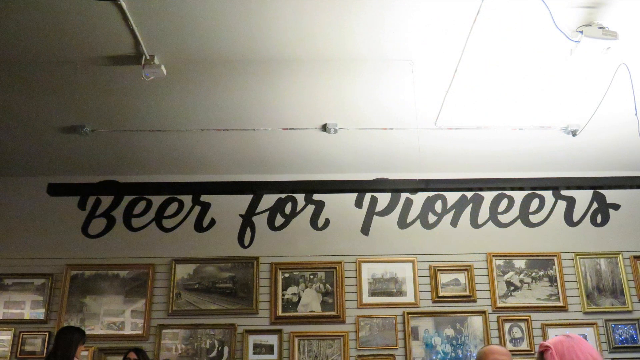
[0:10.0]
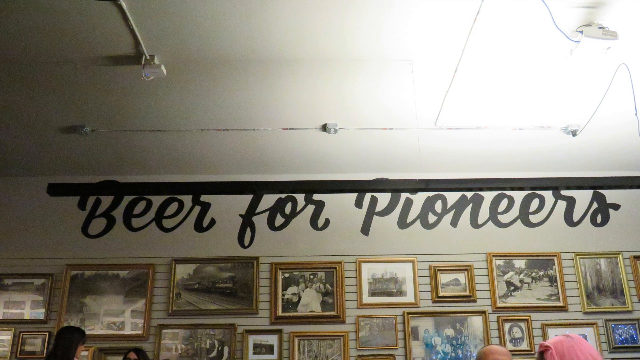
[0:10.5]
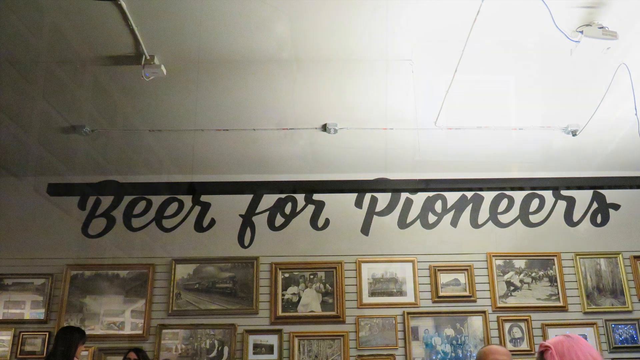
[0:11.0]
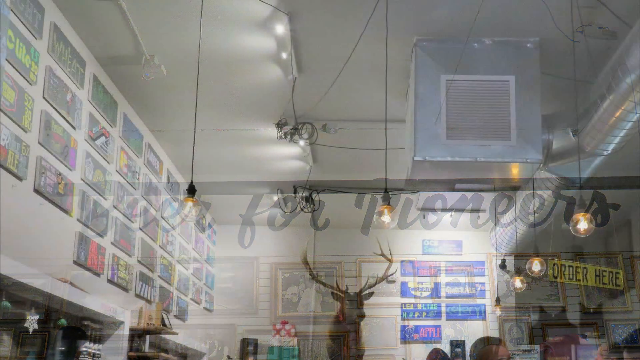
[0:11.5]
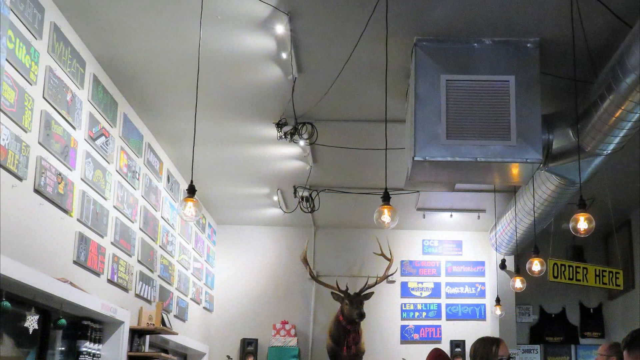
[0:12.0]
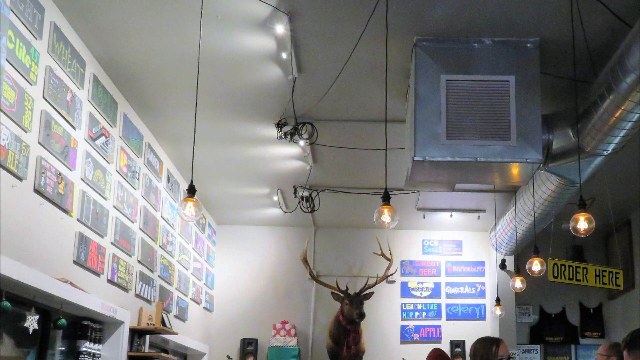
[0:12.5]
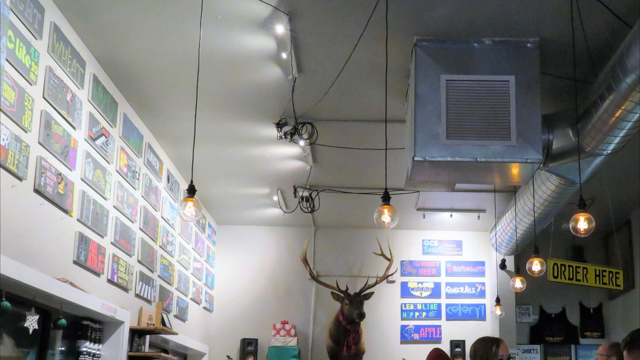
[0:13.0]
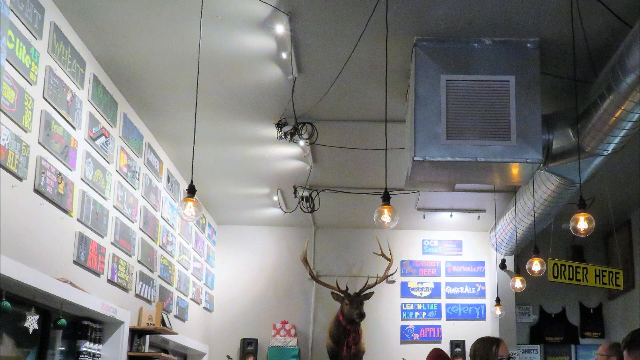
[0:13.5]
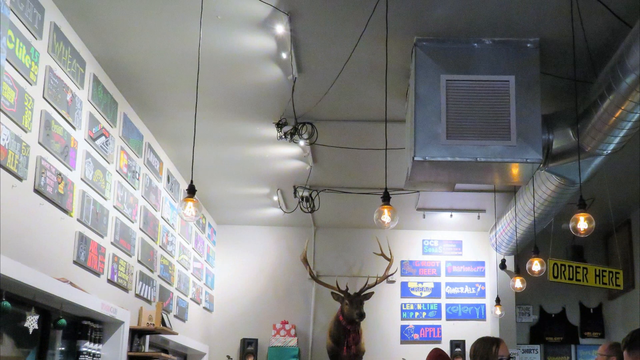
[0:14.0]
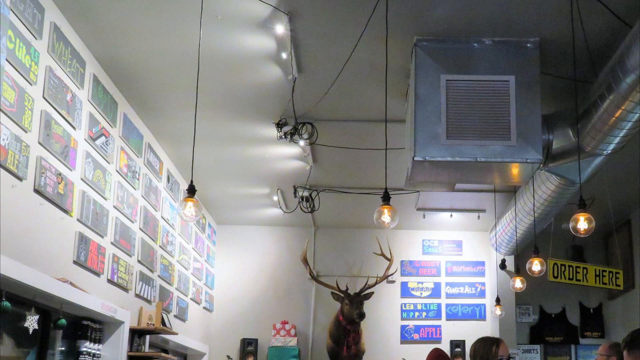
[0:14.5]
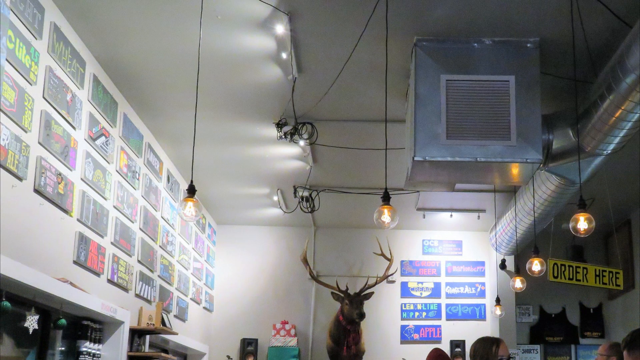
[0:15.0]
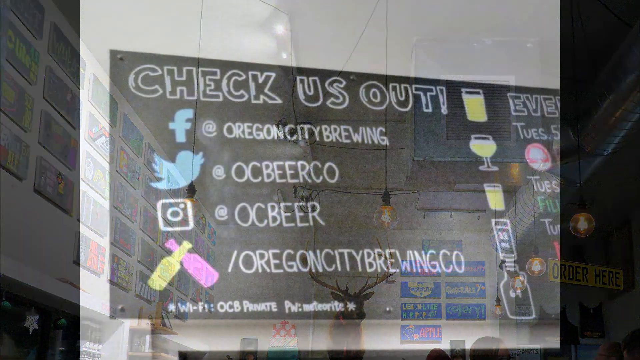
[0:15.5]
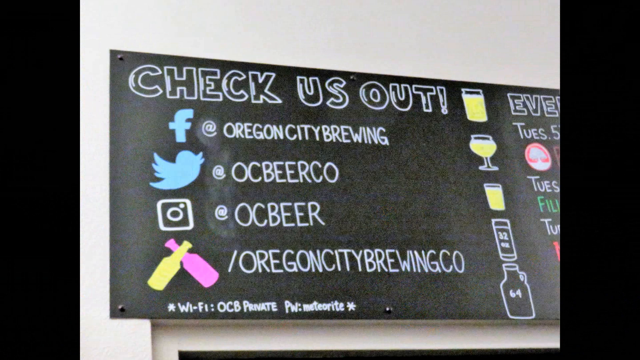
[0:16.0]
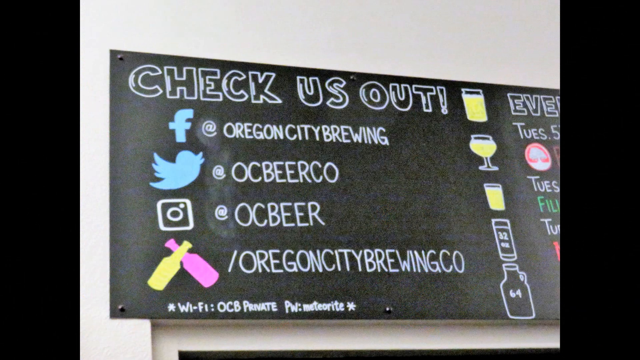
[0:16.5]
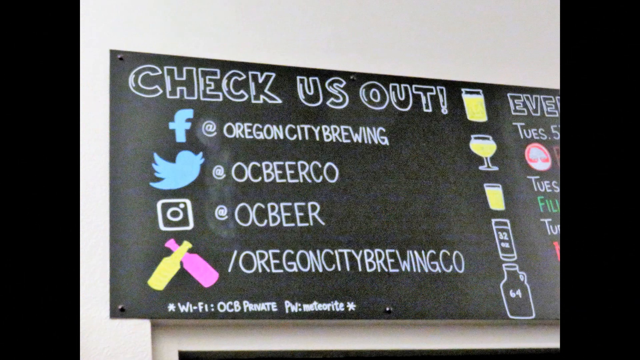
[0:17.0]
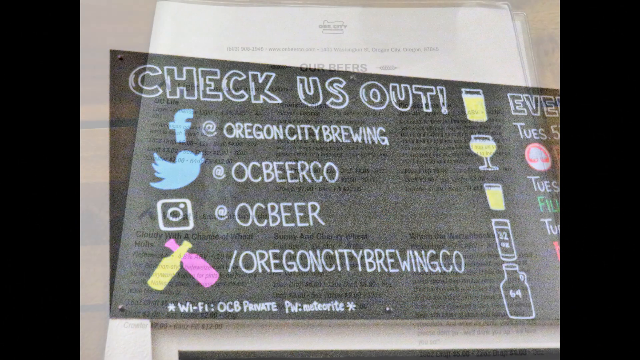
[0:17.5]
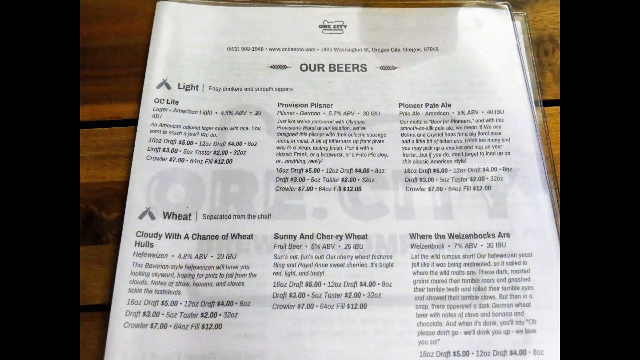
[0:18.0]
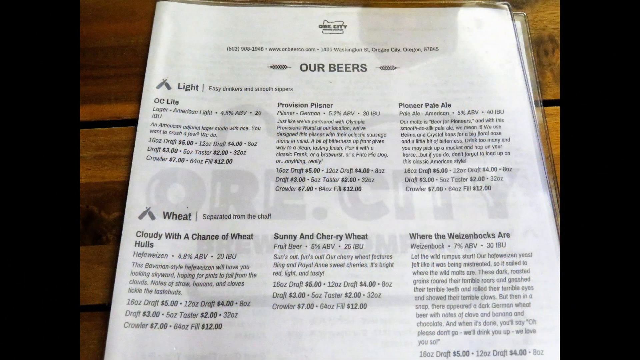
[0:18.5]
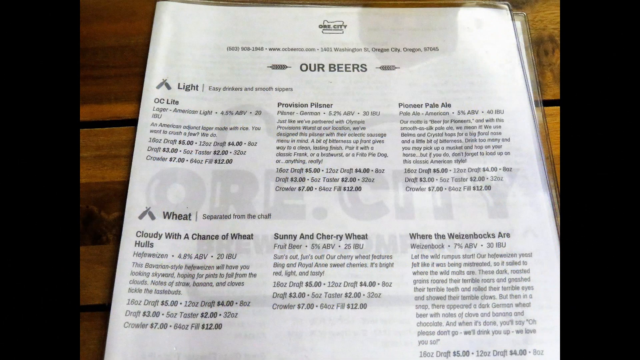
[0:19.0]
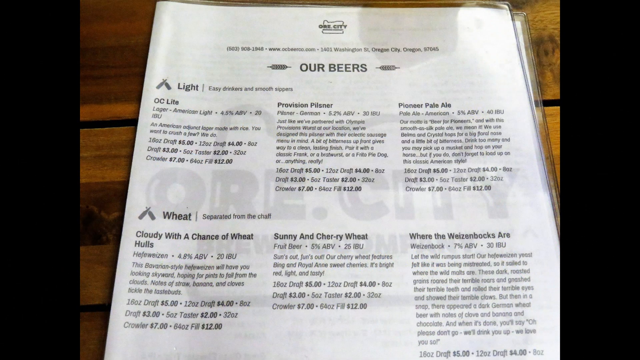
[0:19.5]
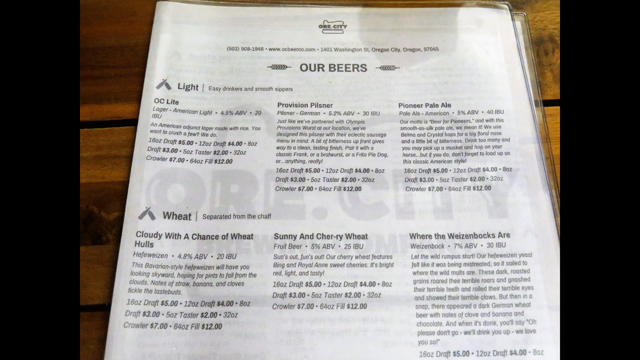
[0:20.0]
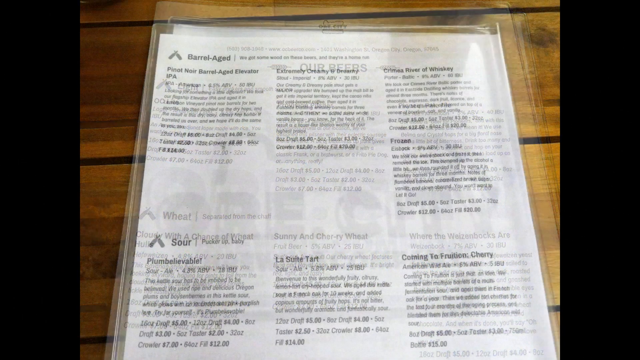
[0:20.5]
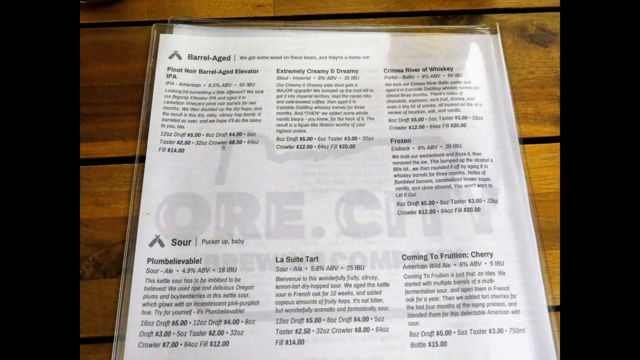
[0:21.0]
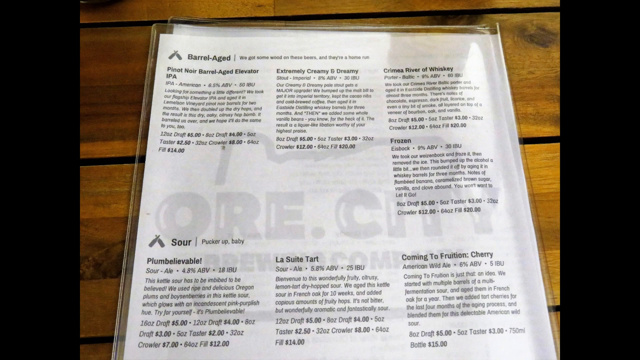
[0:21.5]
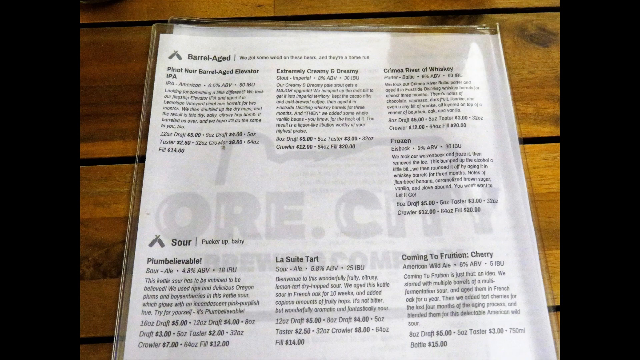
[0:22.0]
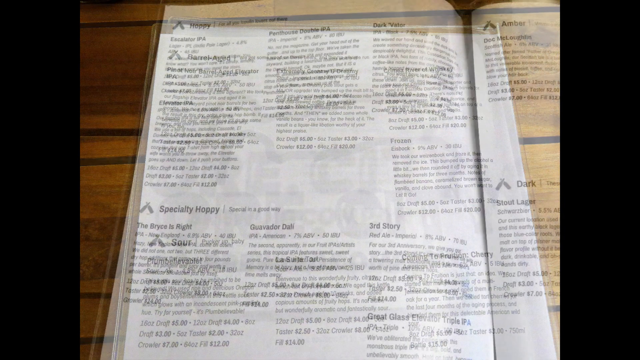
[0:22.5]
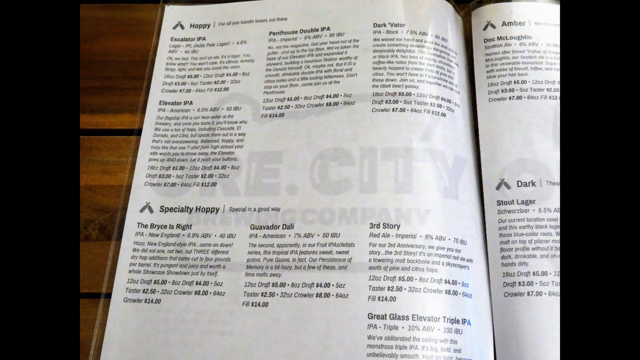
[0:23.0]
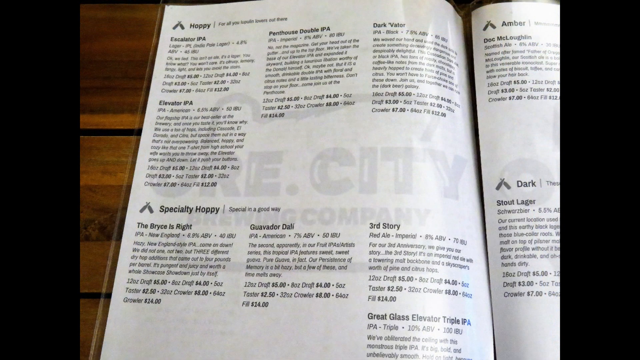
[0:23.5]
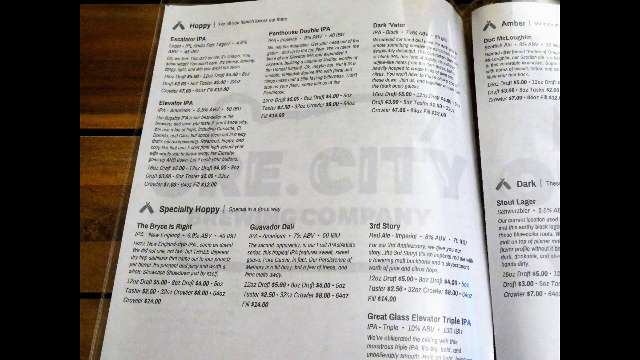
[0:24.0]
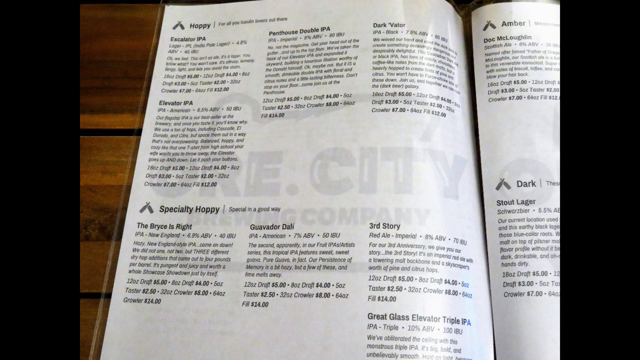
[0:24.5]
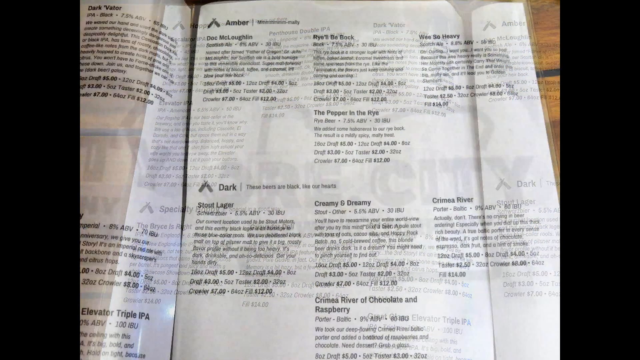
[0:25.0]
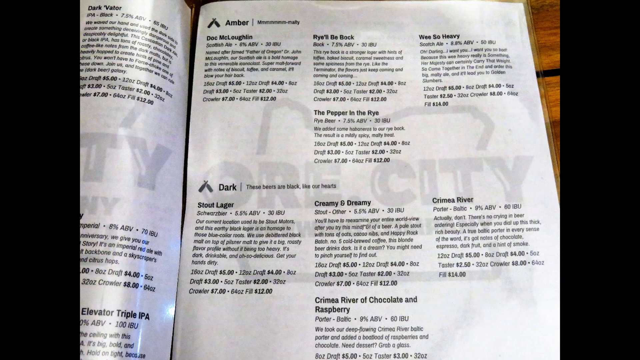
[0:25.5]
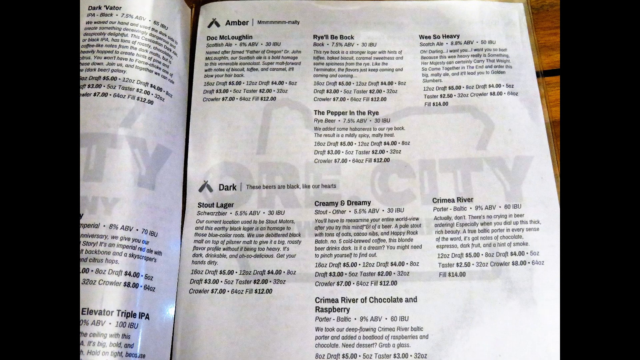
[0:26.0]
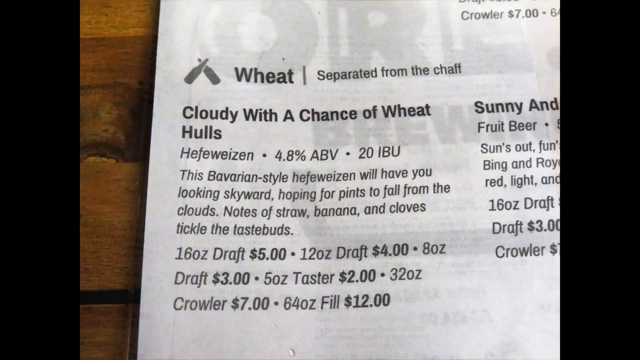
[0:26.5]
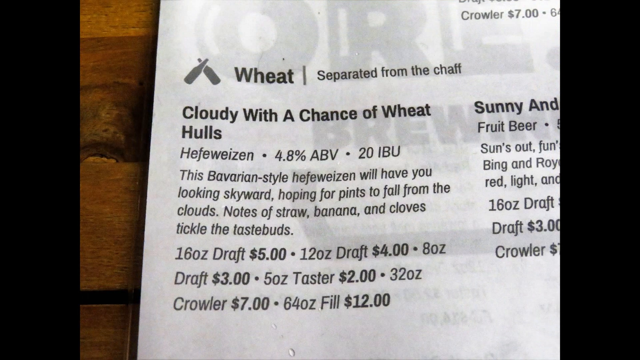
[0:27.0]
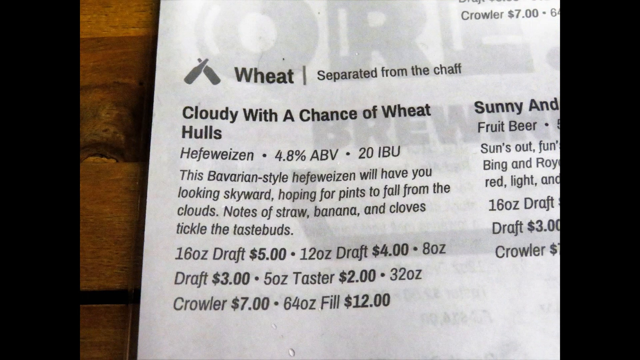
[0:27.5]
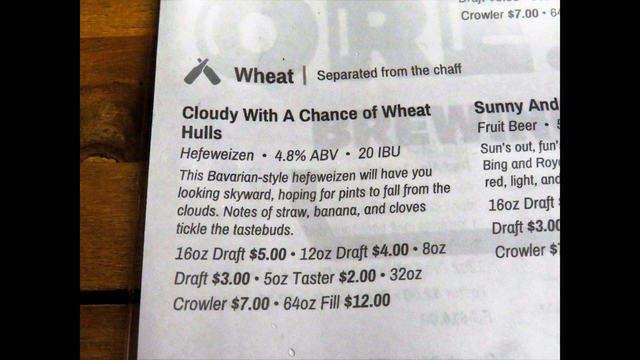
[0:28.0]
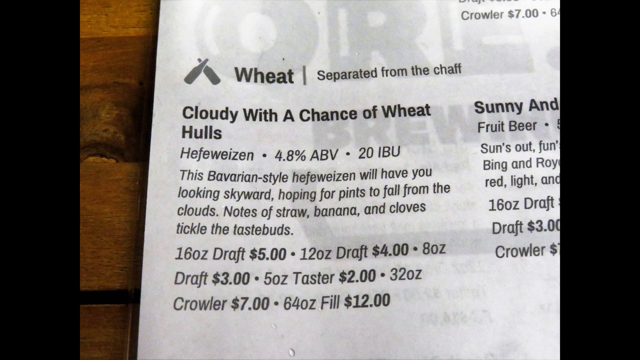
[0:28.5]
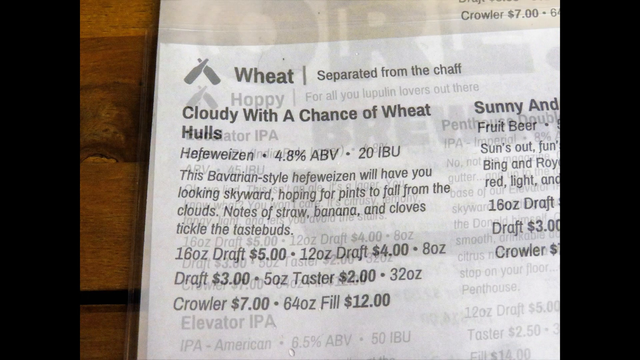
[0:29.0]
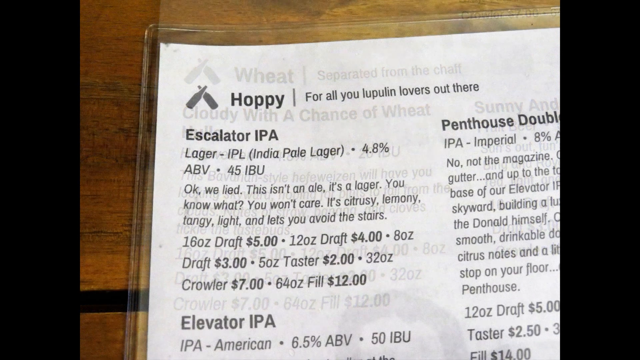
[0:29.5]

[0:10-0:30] Some pictures appear along with text reading "orange seed brewing company" and "Pioneer." There are some papers, and "beer for Pioneers" is written. The room is full of pictures and balls, with many items put up on the wall.